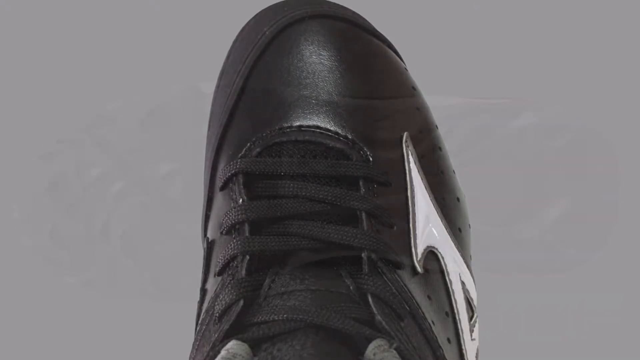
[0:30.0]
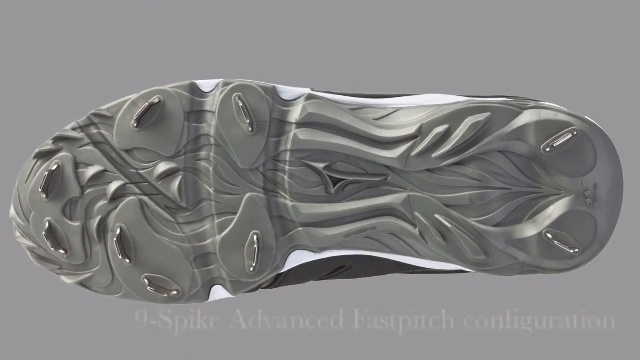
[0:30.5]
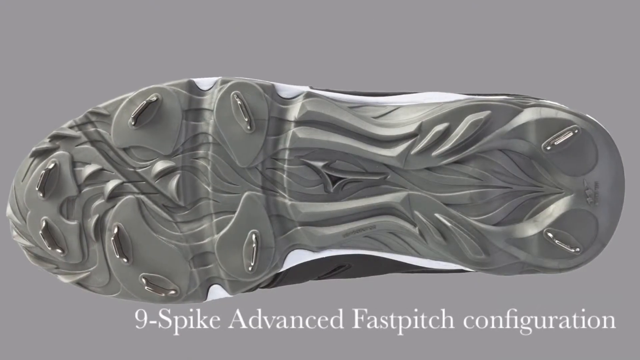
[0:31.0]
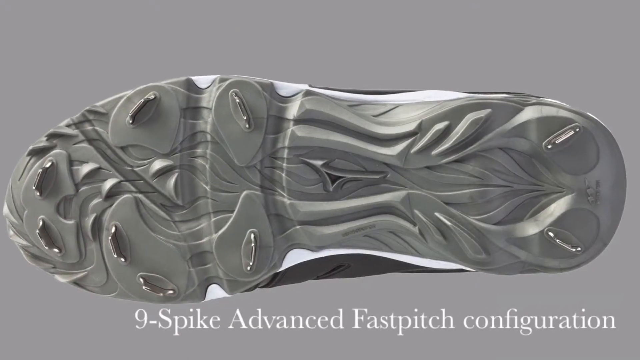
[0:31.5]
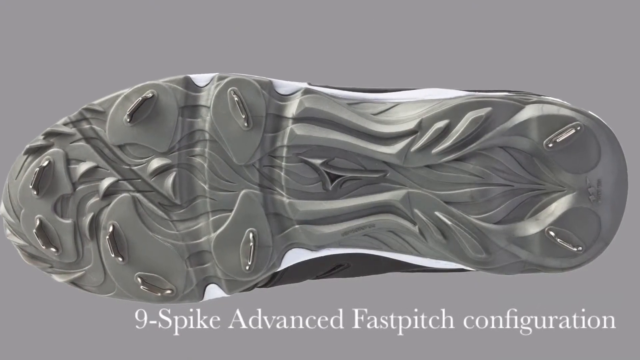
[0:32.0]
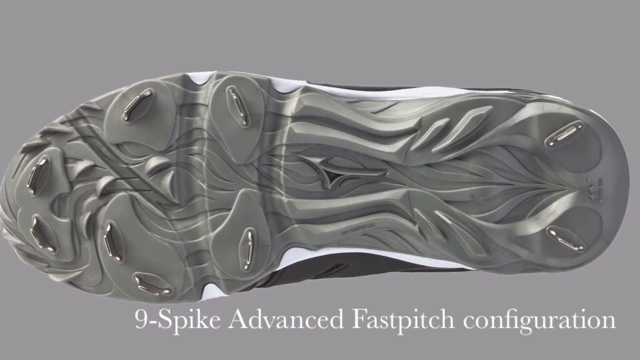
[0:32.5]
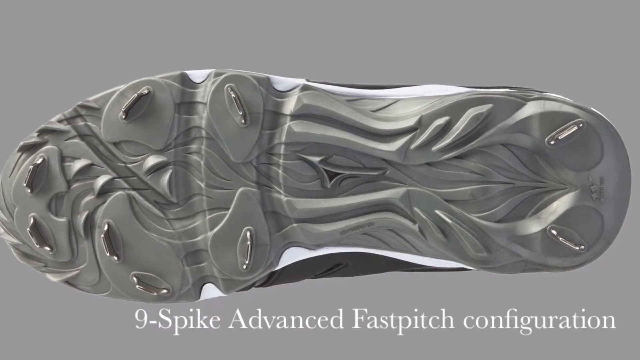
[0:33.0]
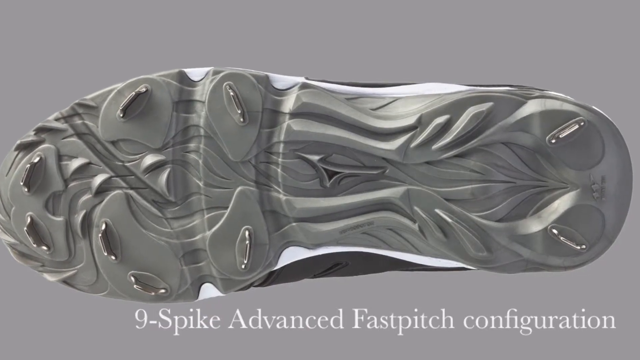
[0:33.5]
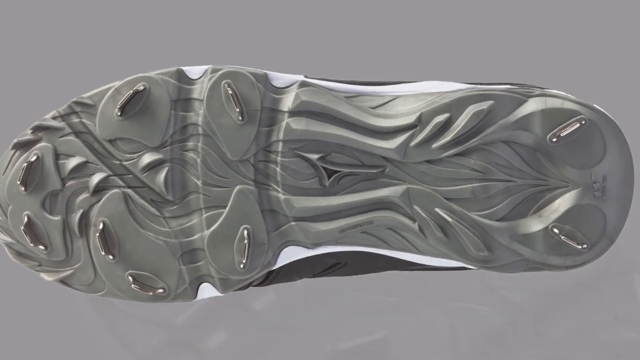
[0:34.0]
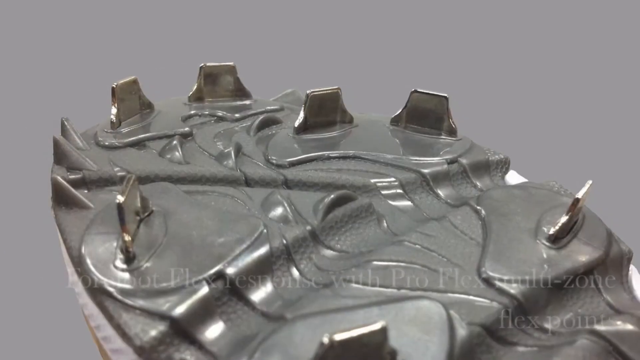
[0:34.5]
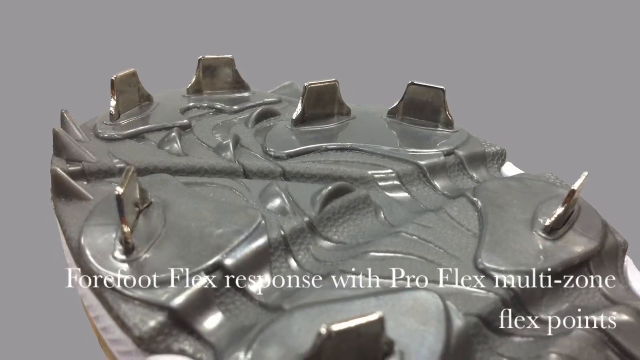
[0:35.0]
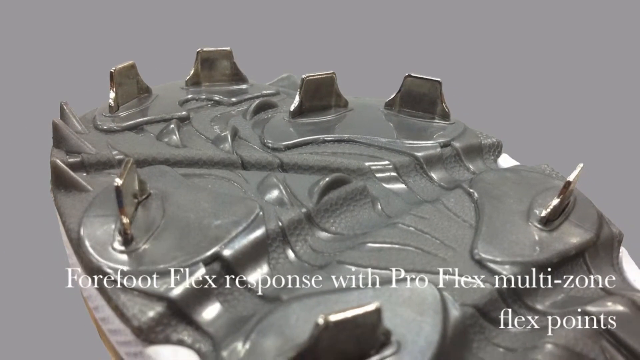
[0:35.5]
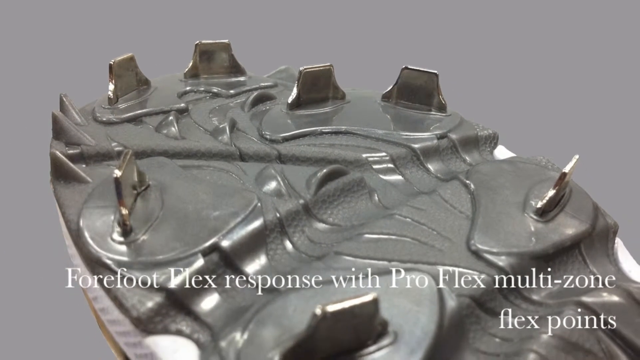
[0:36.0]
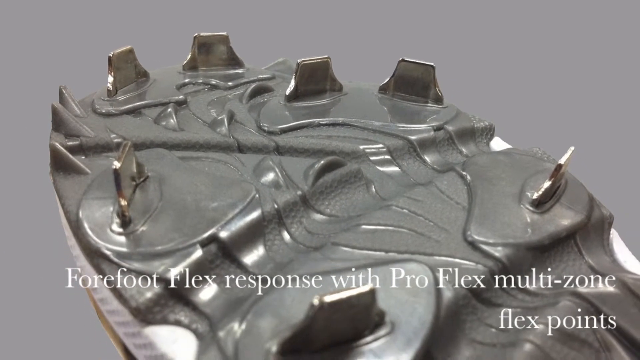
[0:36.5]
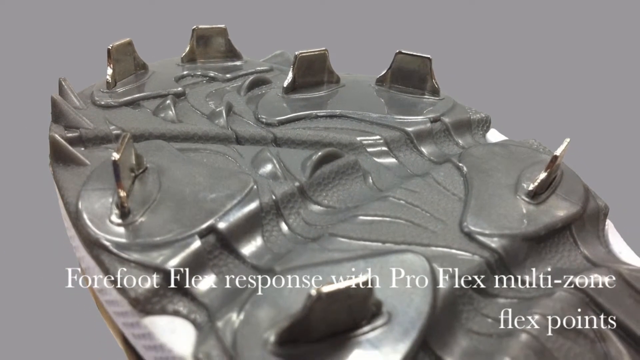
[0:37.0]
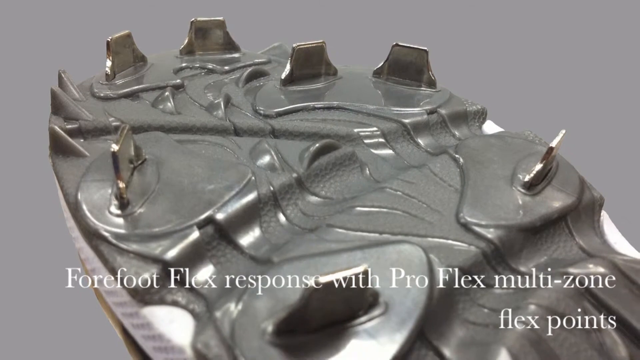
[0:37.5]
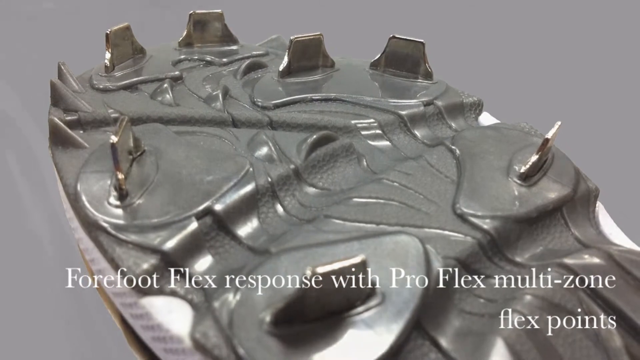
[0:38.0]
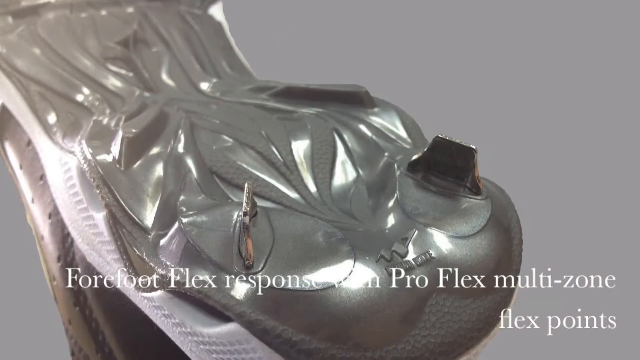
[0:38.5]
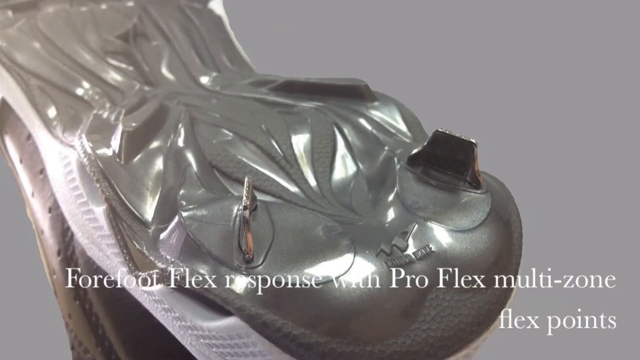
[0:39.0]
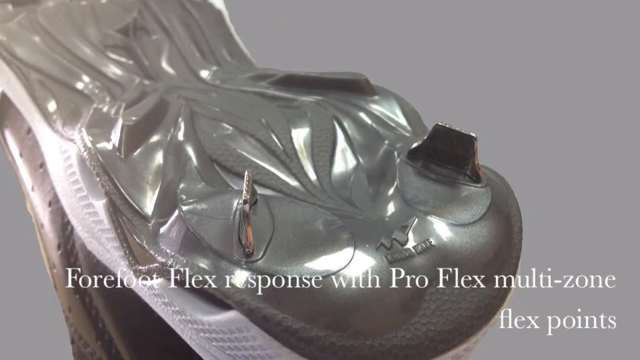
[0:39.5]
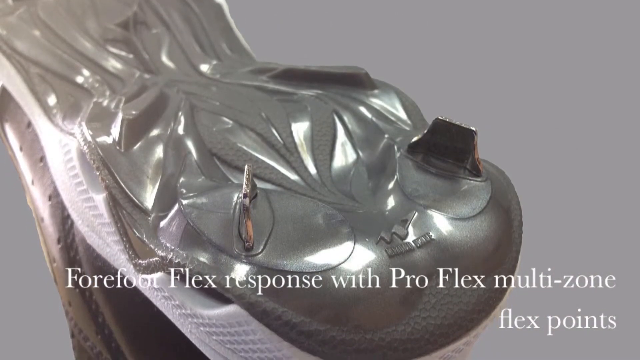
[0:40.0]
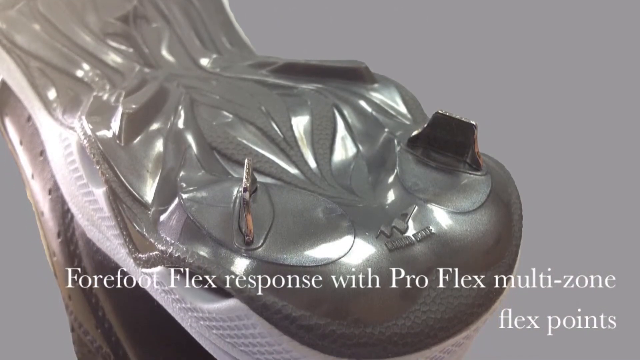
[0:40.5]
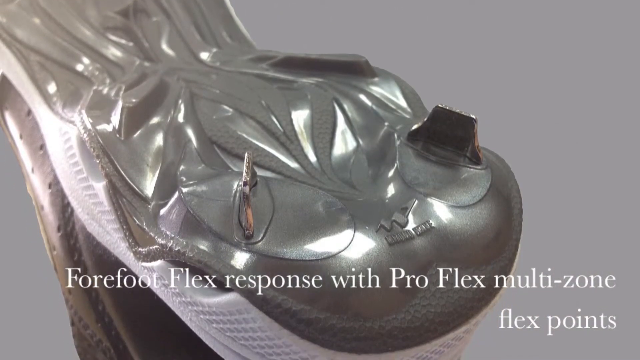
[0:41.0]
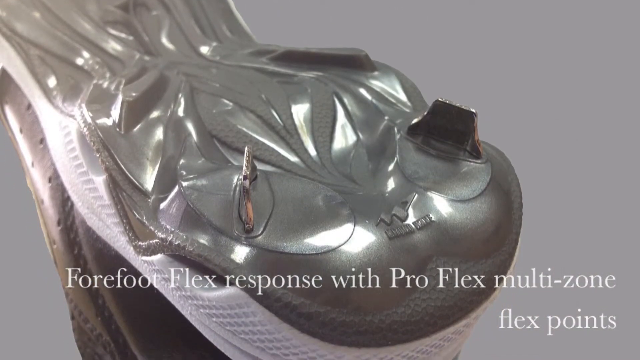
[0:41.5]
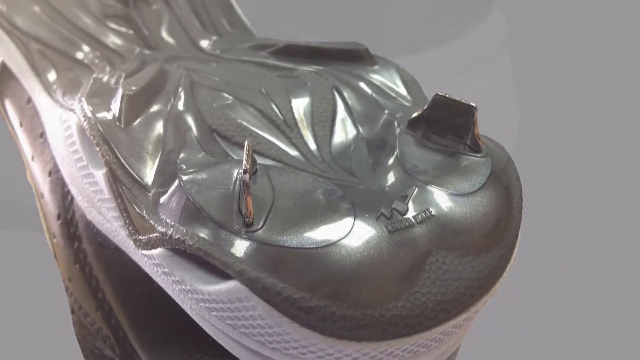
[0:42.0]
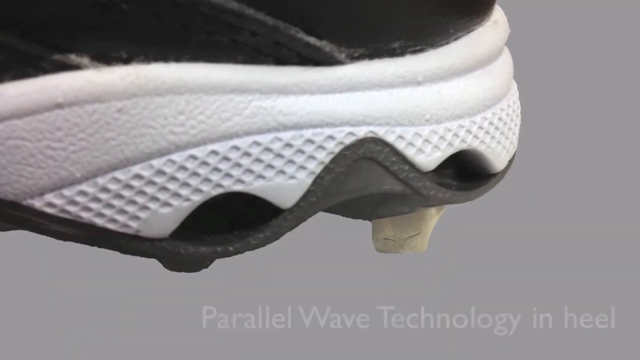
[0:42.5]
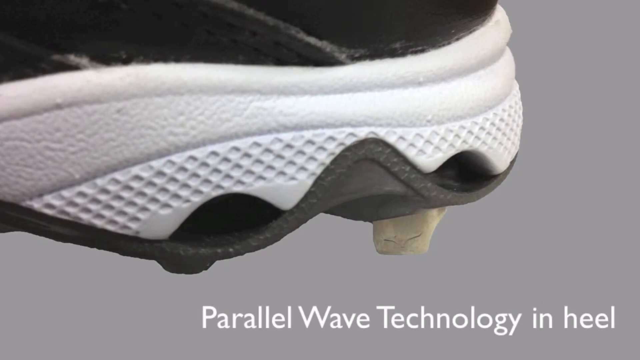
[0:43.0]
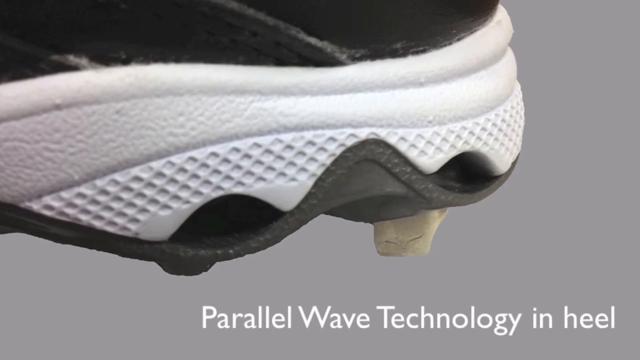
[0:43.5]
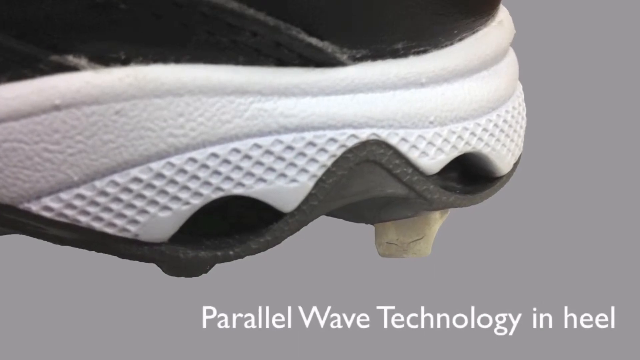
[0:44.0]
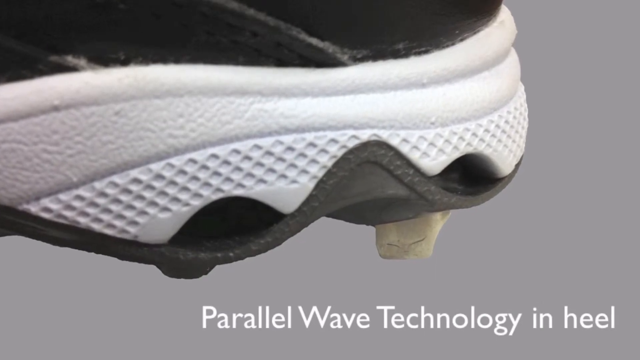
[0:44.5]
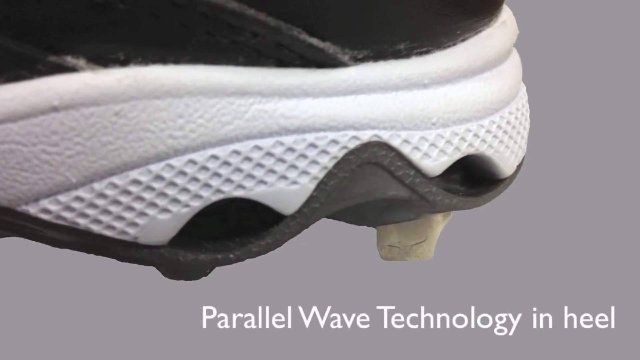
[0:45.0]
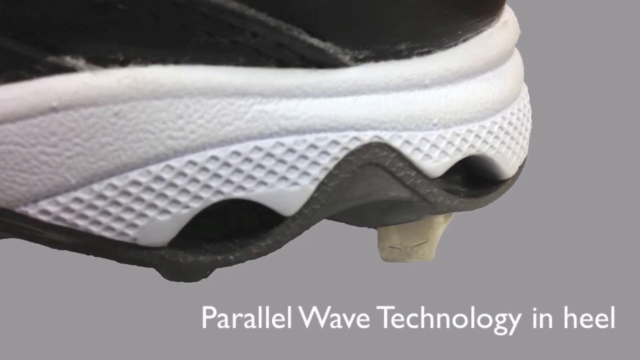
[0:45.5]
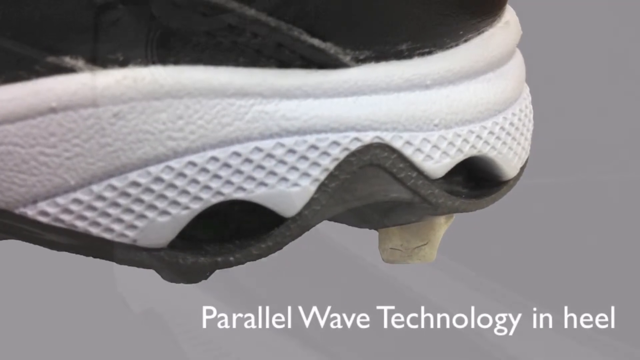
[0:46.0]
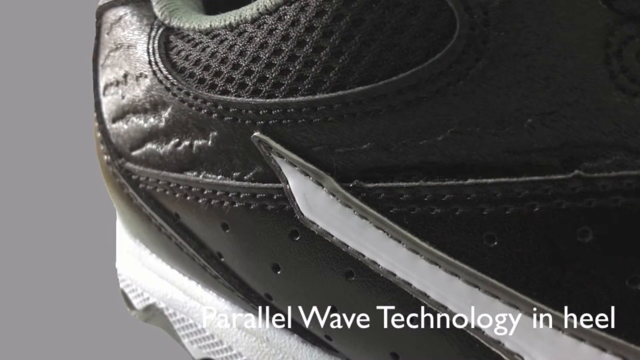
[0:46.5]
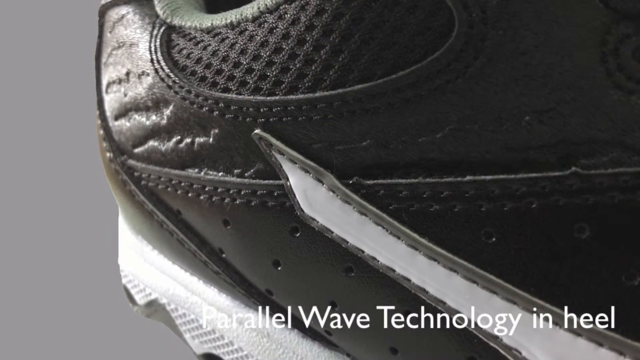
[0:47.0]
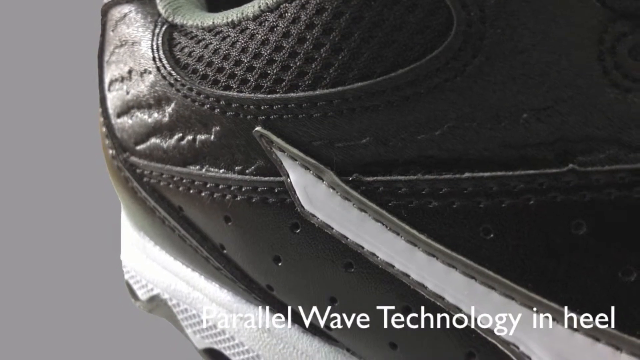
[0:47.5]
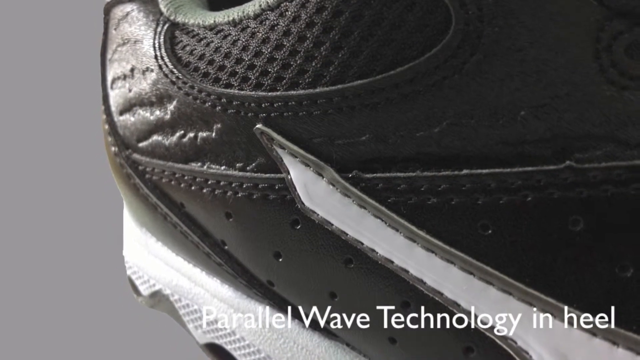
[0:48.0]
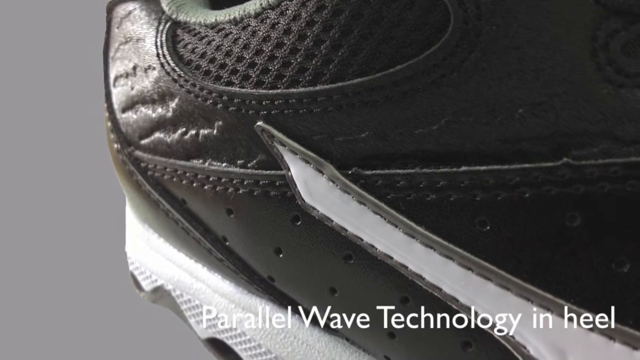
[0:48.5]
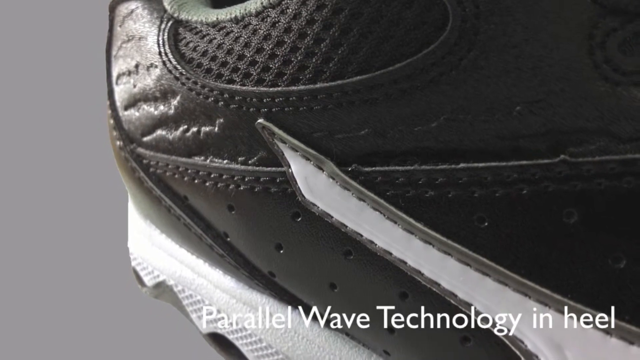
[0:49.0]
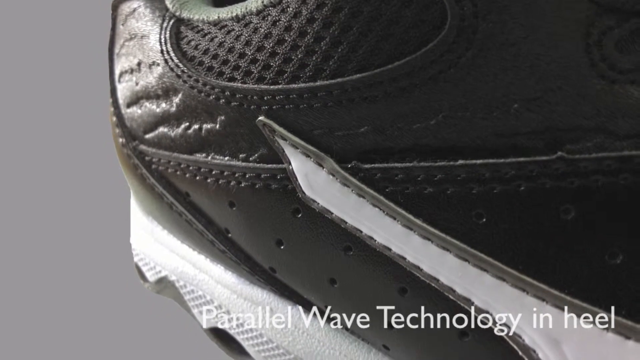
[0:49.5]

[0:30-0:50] More details about the 9-spike advanced fast pitch cleat are shown. A shot of the sole of the cleat shows the configuration of the spikes. Then the "4-fold flex response" with "ProFlex multi-zone flex plates" is shown, with a close-up of the spikes on the bottom of the cleat. The heel of the shoe is shown next, with text saying it has "parallel wave technology"; in a close-up of the back of the cleat, a wave is visible over a spike on the back. The sequence ends with a close-up of the back and the breathable spot of the cleat. The cleat shown is the black and white one: black leather all the way around with a gray sole on the bottom where the spikes are.